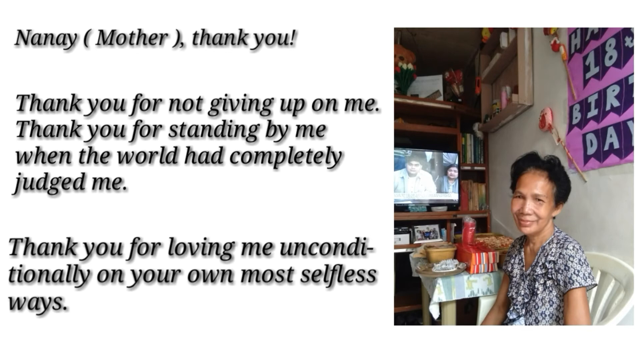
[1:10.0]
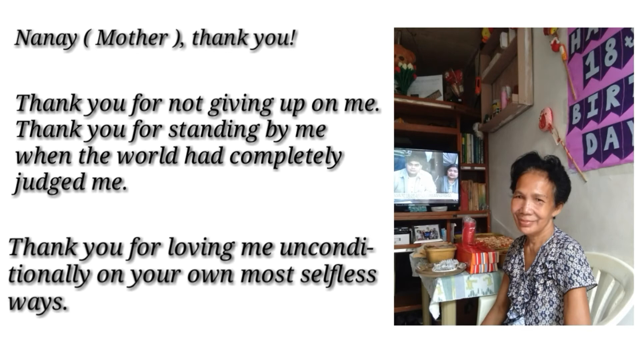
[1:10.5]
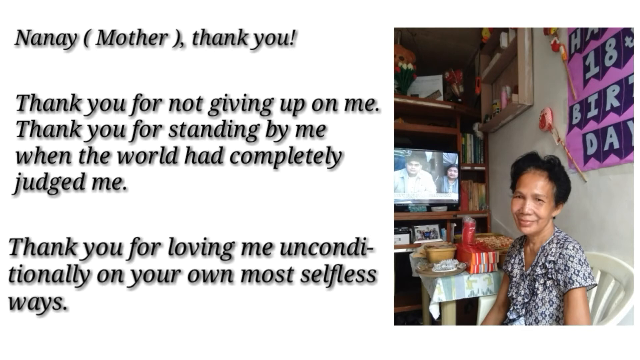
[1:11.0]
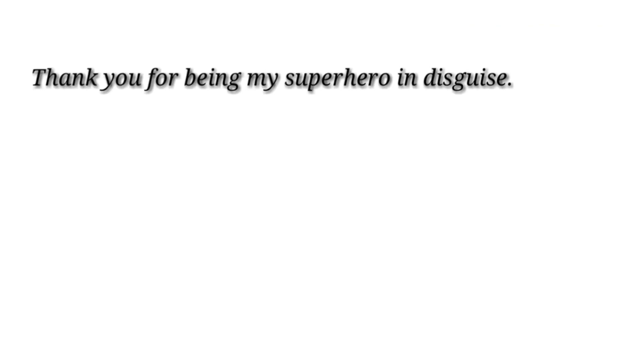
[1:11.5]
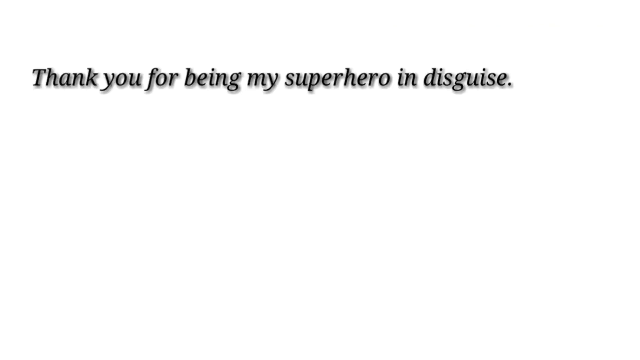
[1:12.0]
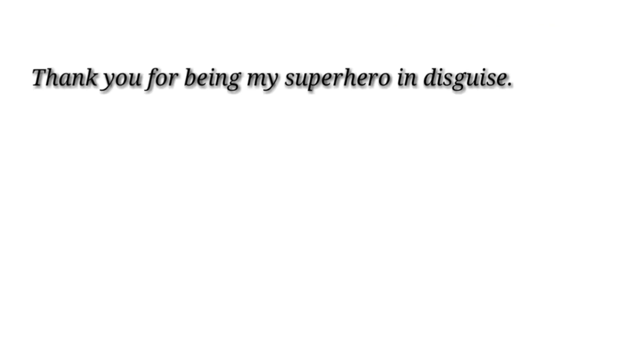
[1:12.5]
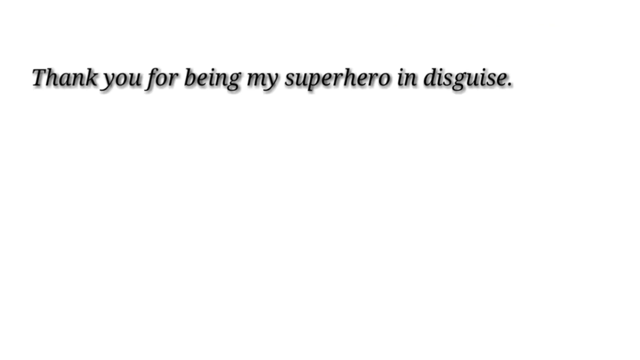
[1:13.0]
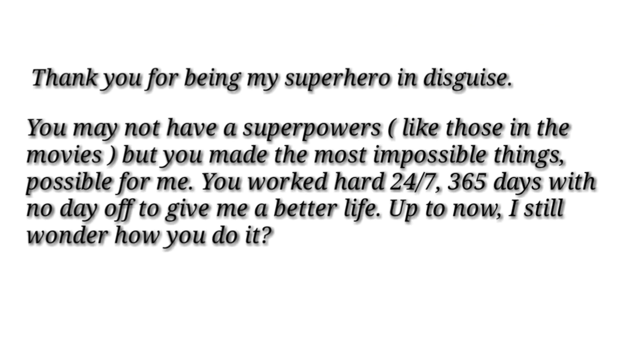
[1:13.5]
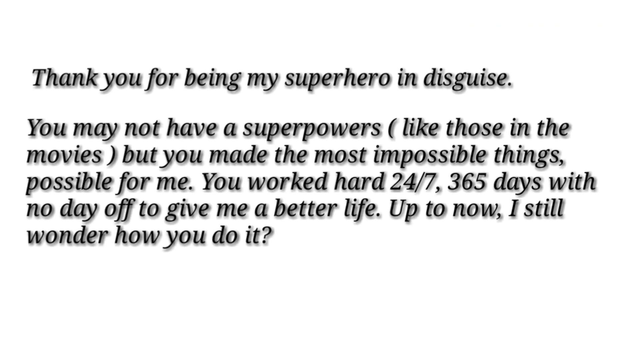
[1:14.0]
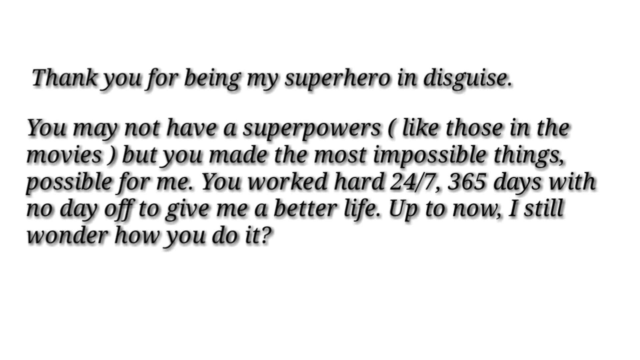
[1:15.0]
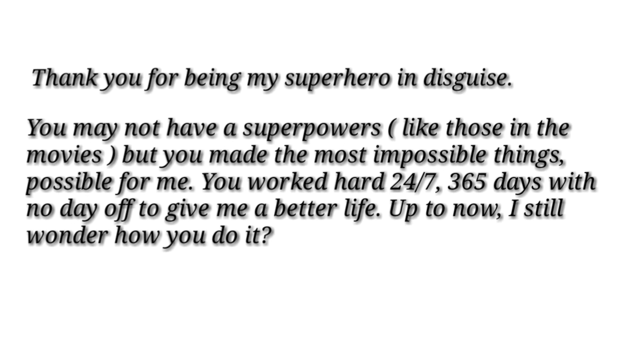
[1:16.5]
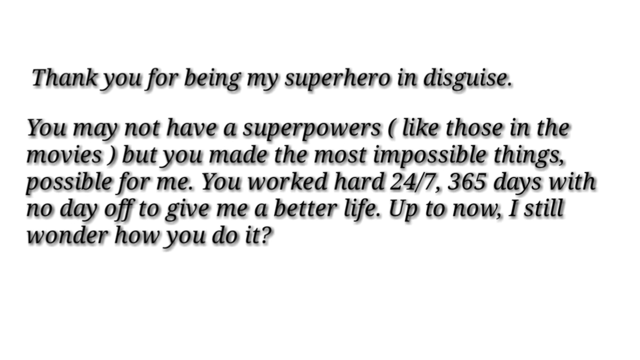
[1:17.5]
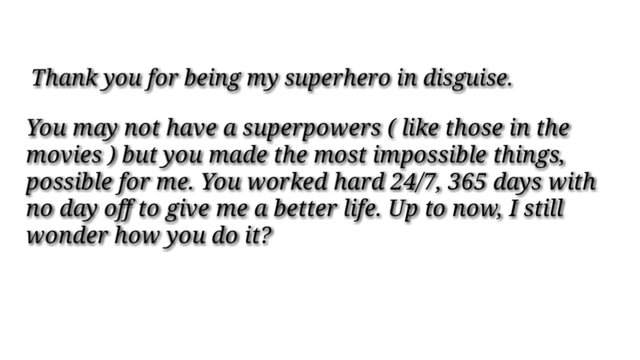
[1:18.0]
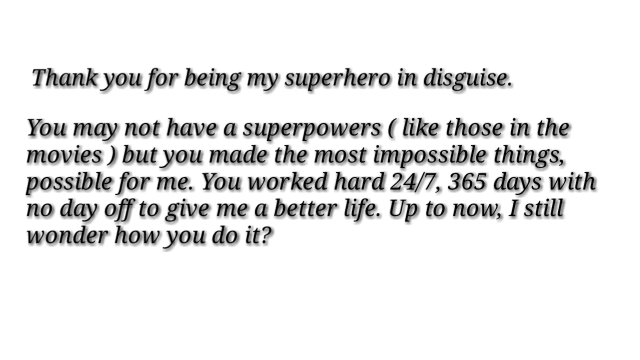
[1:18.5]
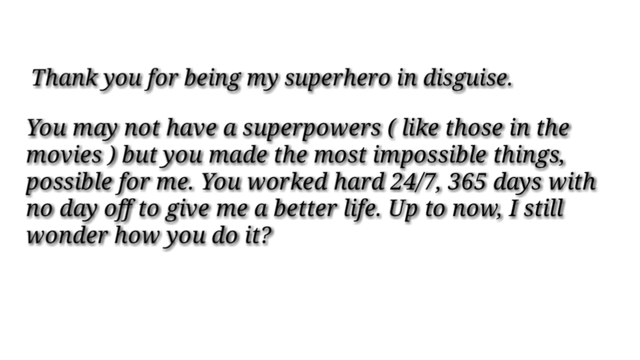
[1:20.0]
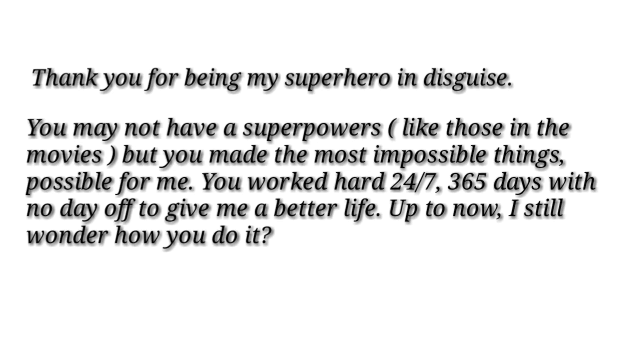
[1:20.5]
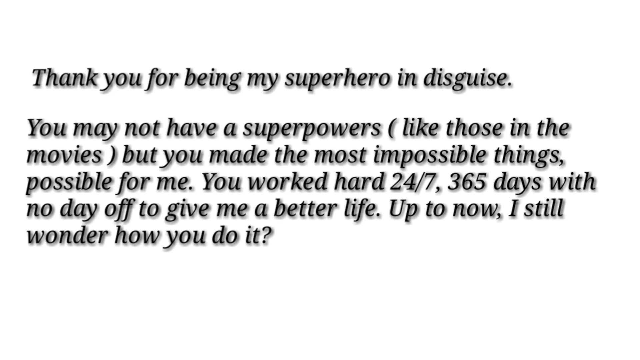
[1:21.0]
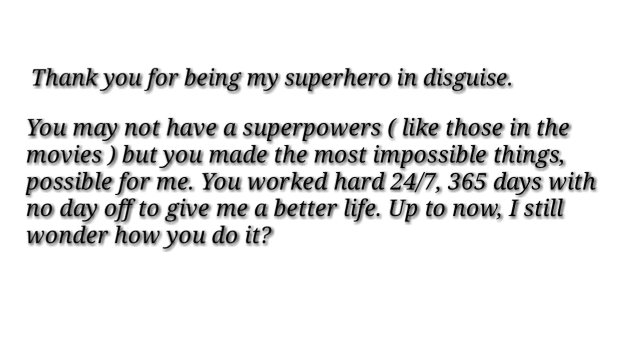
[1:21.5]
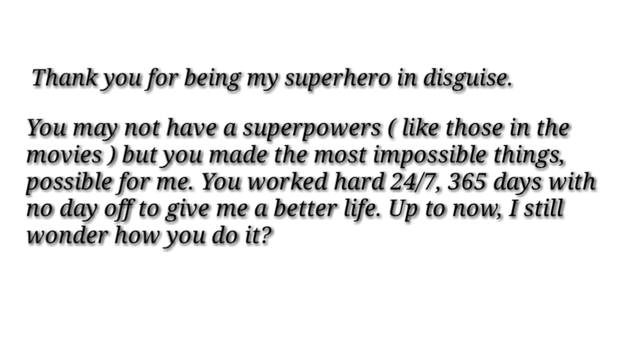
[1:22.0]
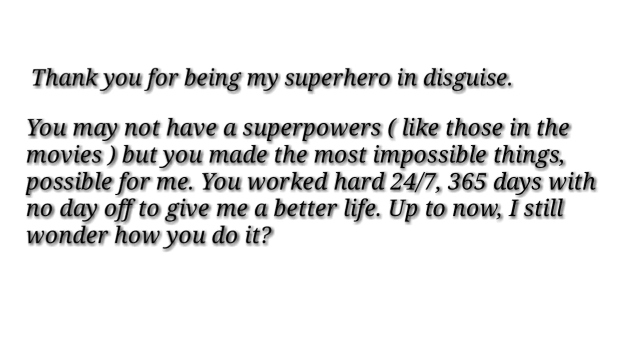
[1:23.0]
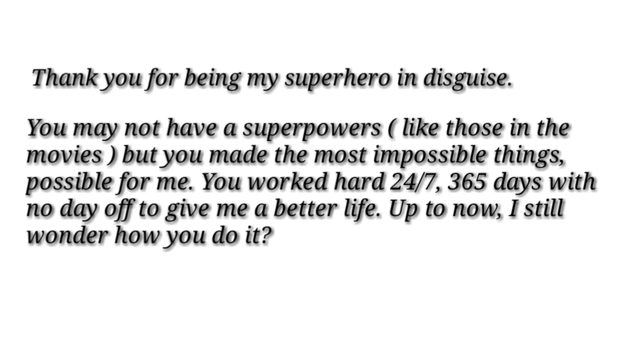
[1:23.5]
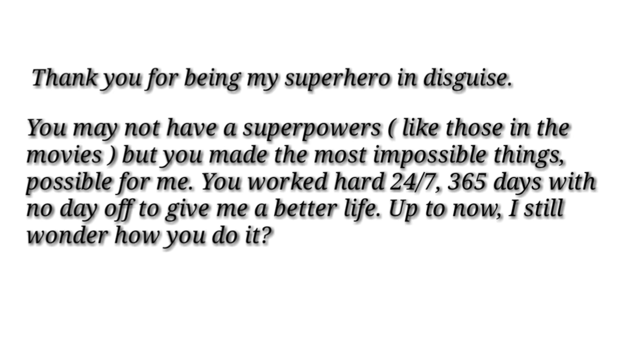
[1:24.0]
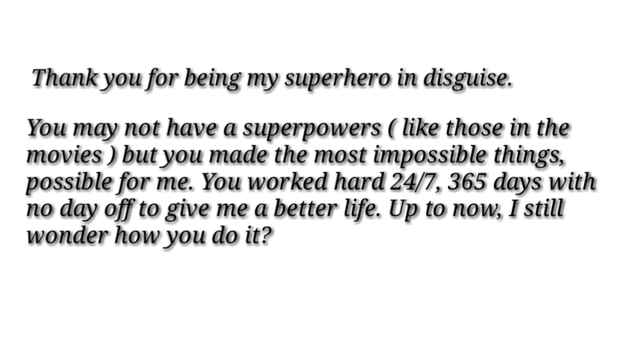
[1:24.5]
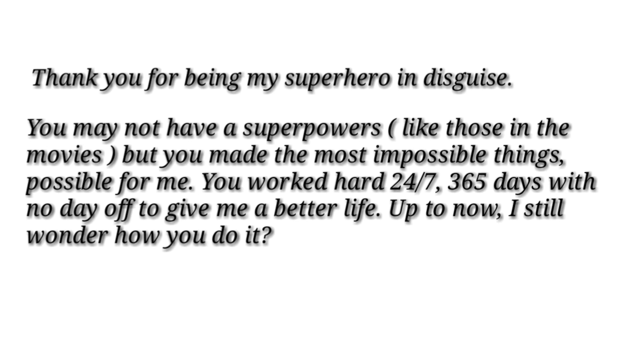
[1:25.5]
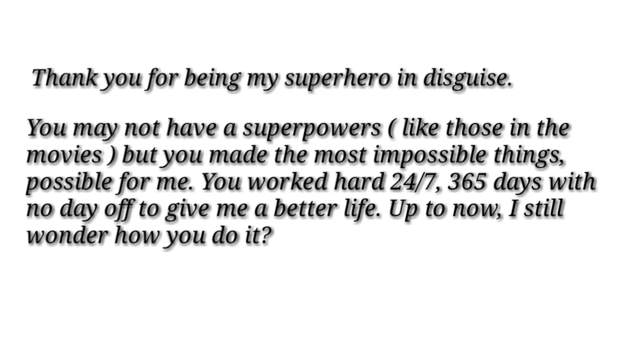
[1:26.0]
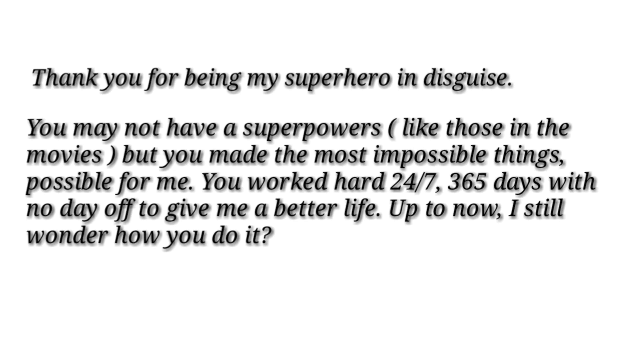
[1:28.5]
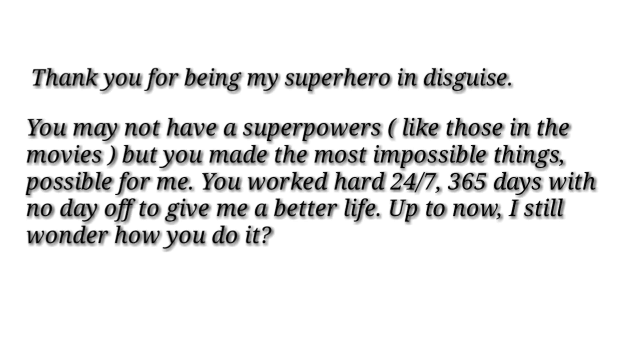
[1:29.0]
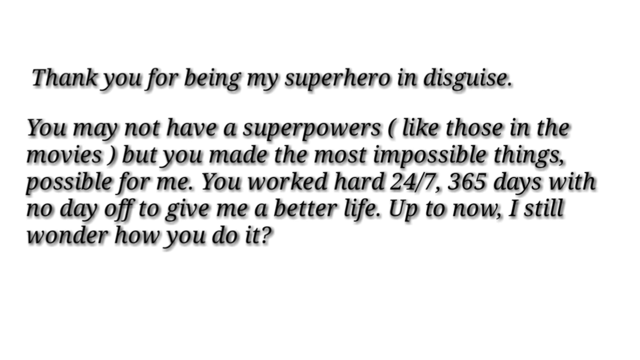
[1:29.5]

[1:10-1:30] The scene is at home, with a TV in the background, and seems to be a birthday party. Some gifts appear to be there. It is a happy moment between a mother and a daughter, and she is very happy.